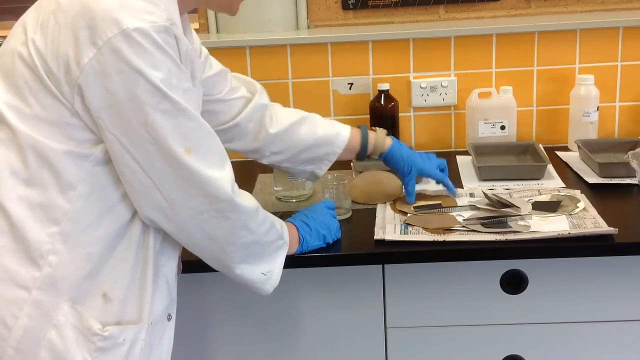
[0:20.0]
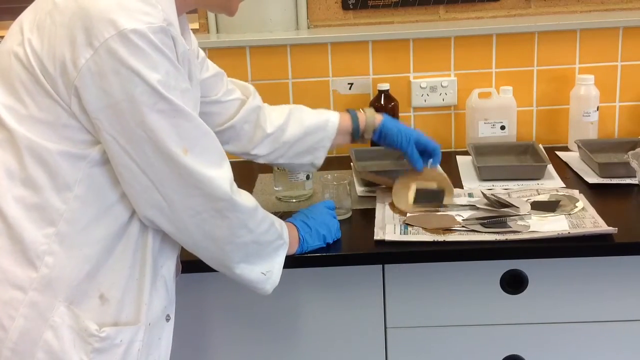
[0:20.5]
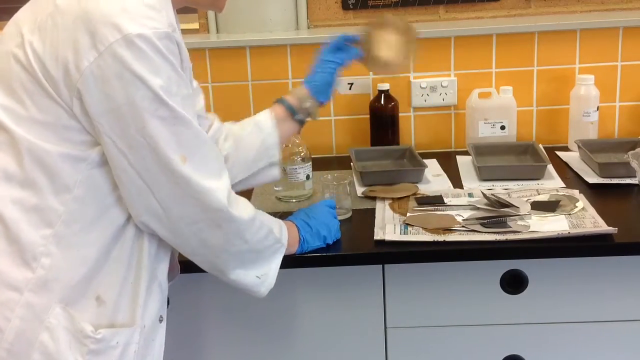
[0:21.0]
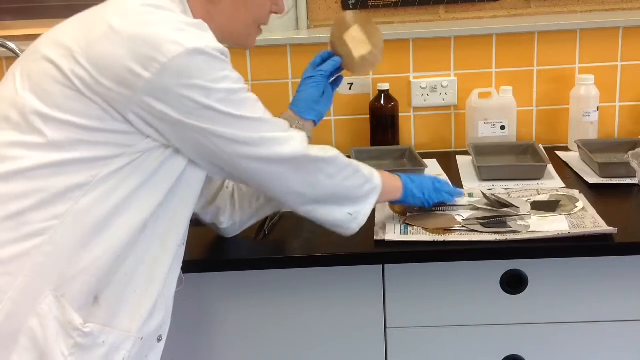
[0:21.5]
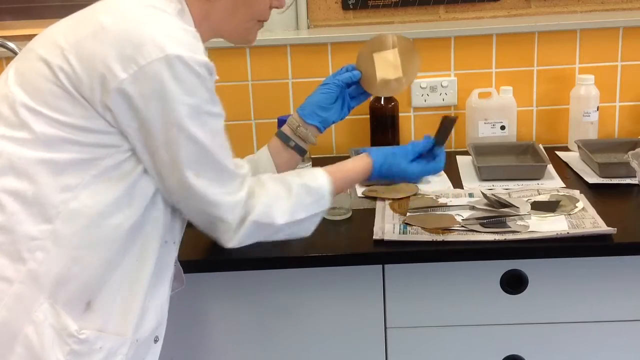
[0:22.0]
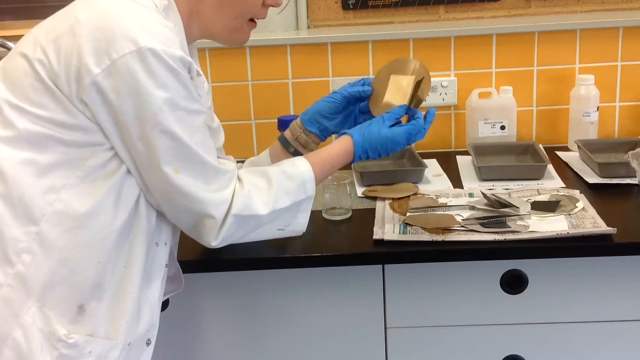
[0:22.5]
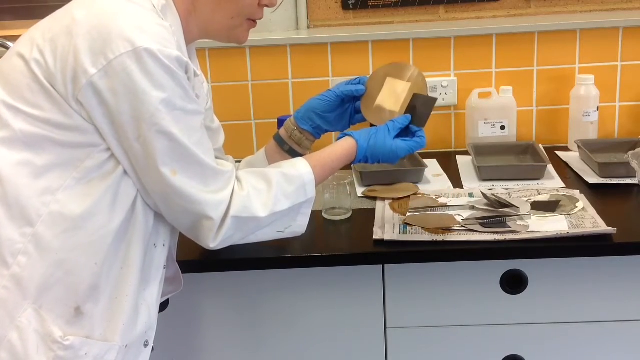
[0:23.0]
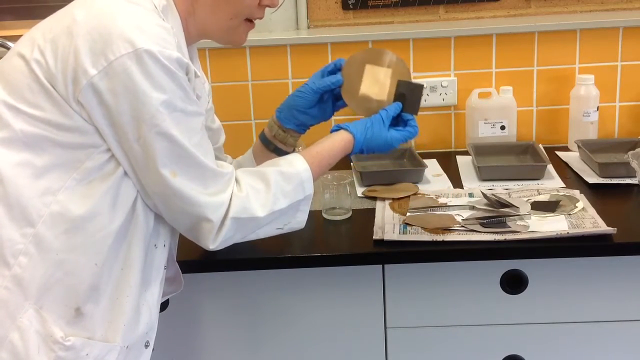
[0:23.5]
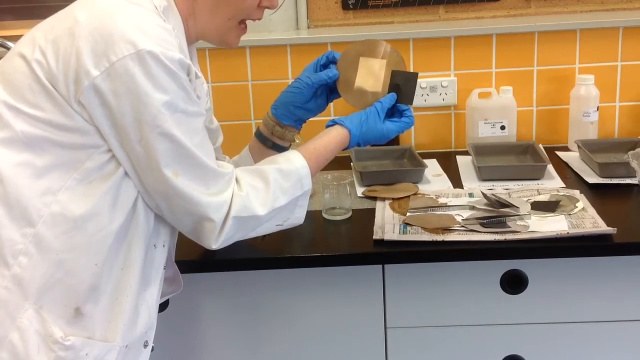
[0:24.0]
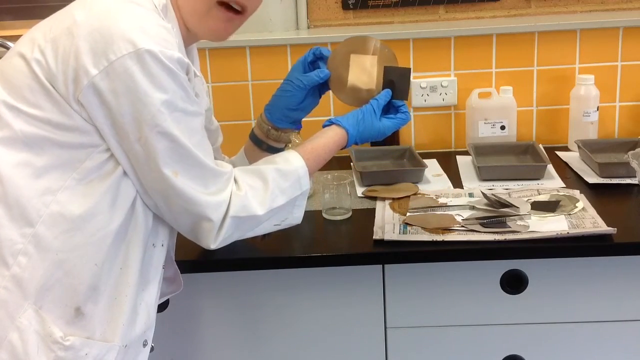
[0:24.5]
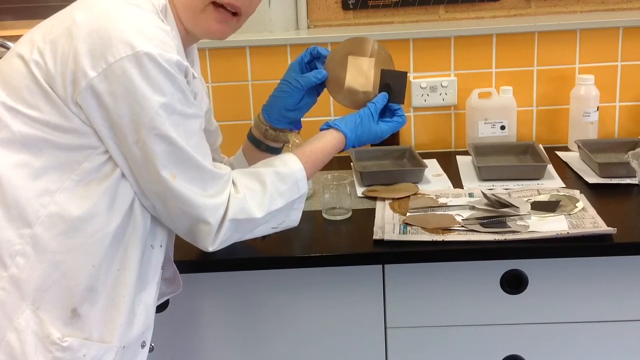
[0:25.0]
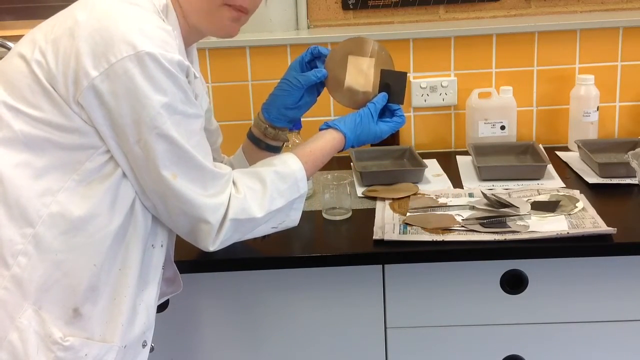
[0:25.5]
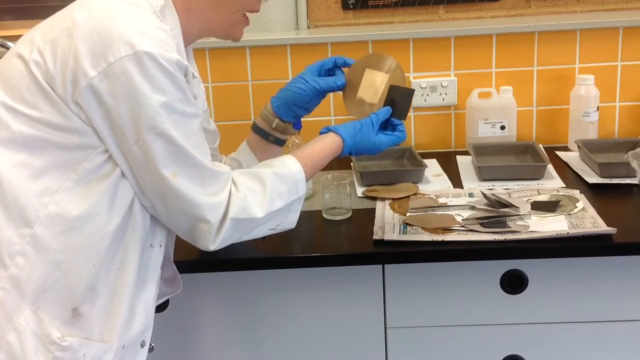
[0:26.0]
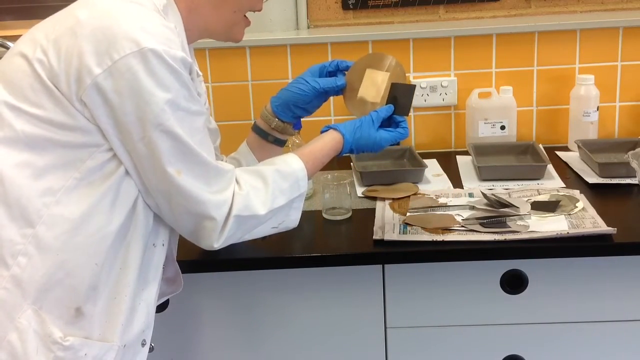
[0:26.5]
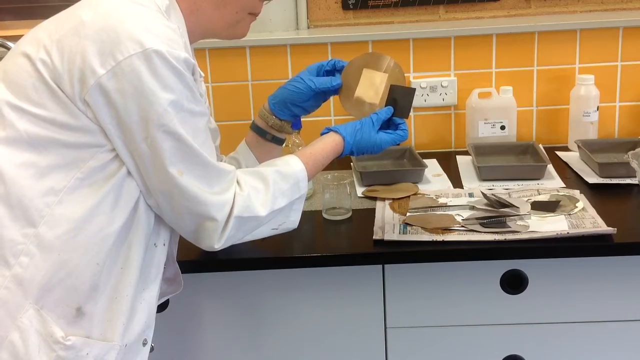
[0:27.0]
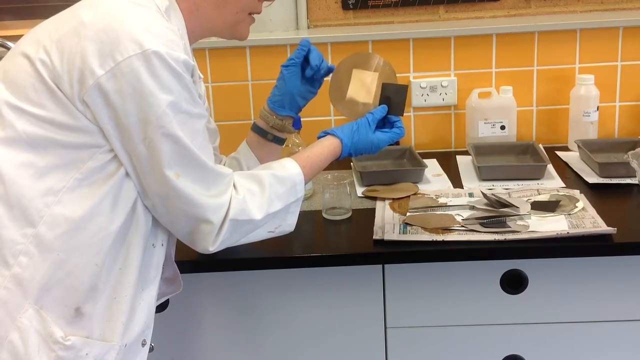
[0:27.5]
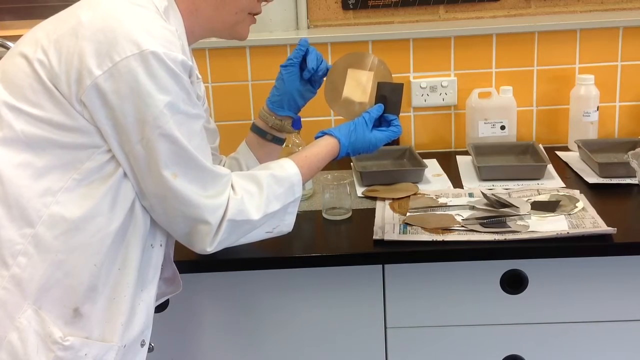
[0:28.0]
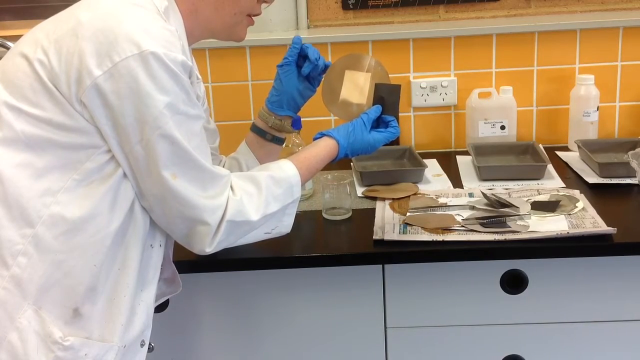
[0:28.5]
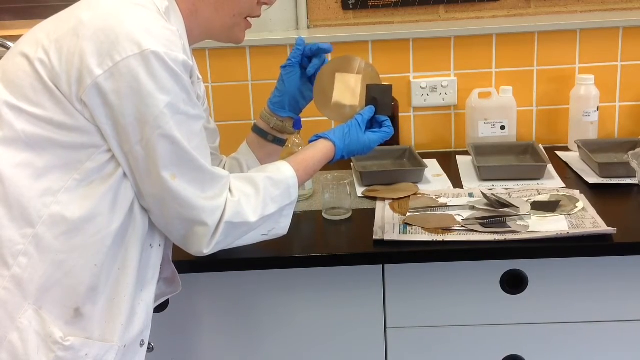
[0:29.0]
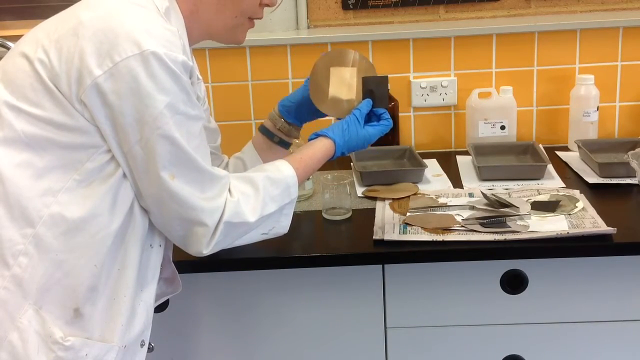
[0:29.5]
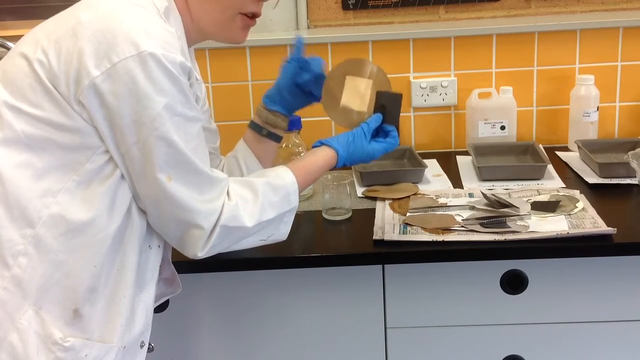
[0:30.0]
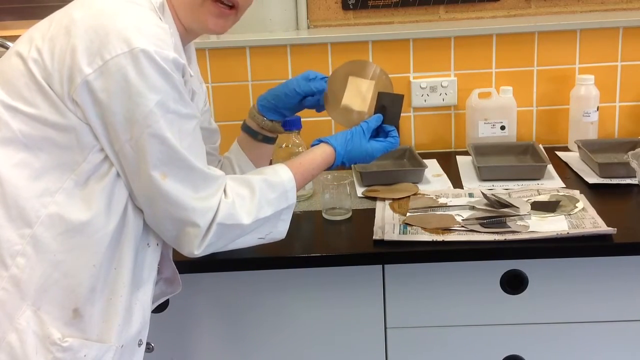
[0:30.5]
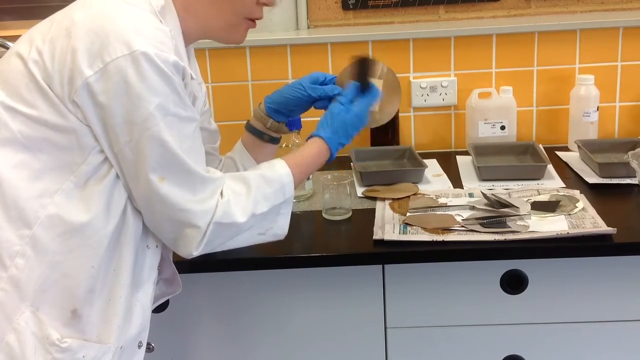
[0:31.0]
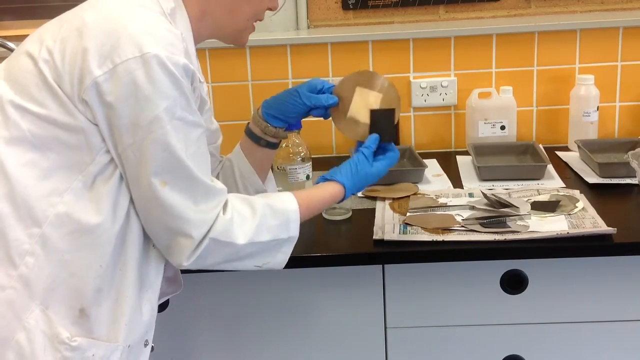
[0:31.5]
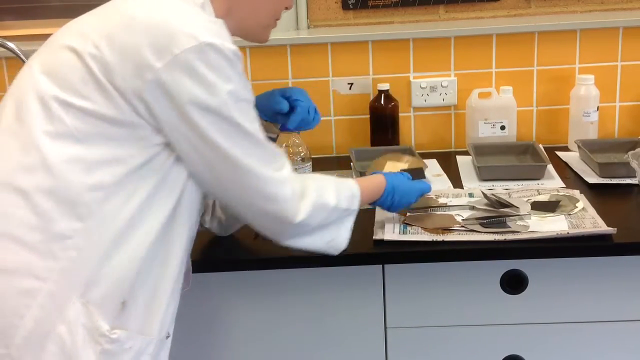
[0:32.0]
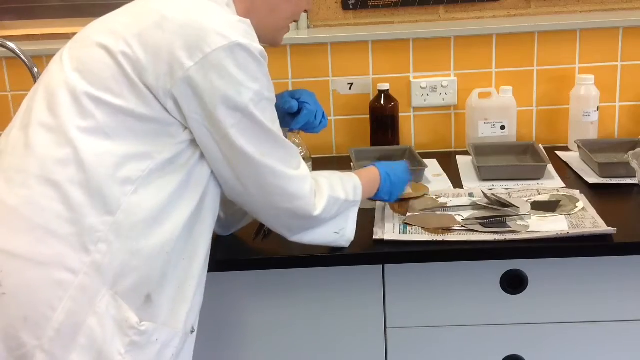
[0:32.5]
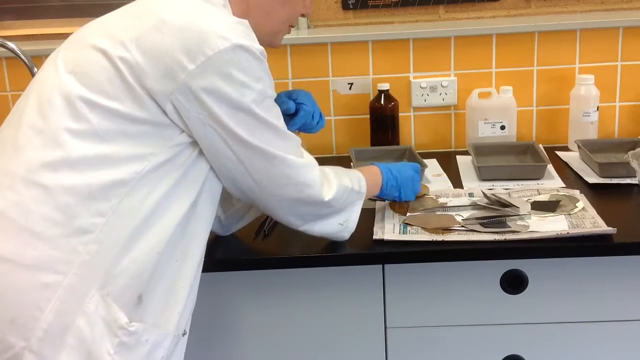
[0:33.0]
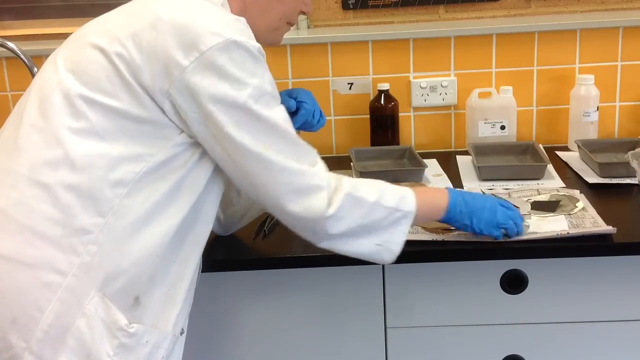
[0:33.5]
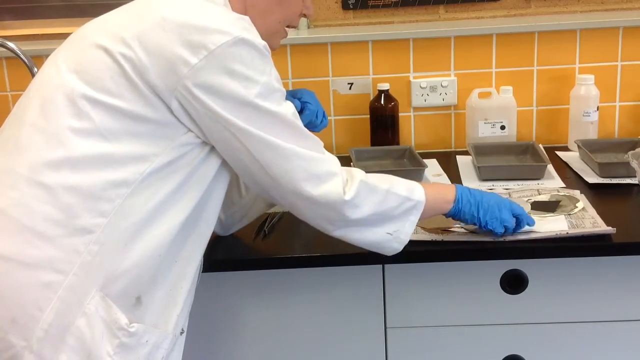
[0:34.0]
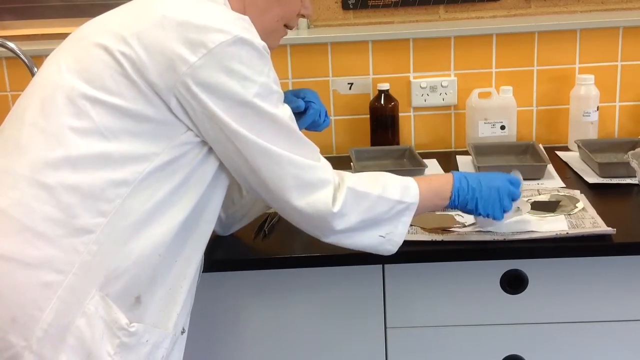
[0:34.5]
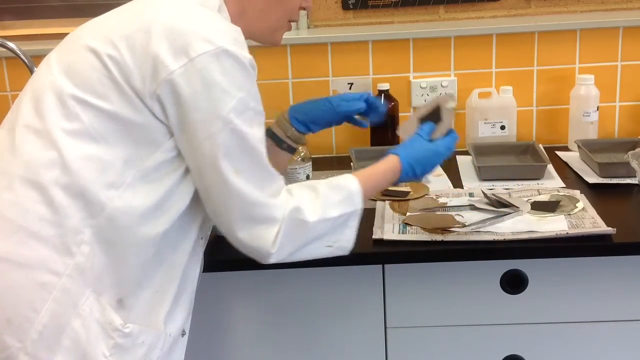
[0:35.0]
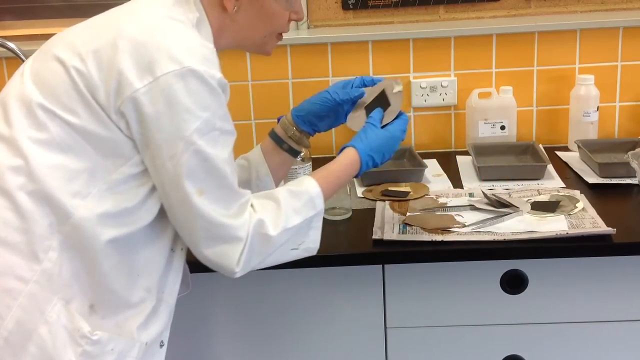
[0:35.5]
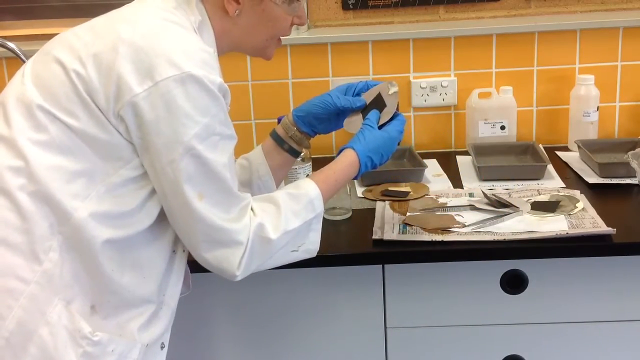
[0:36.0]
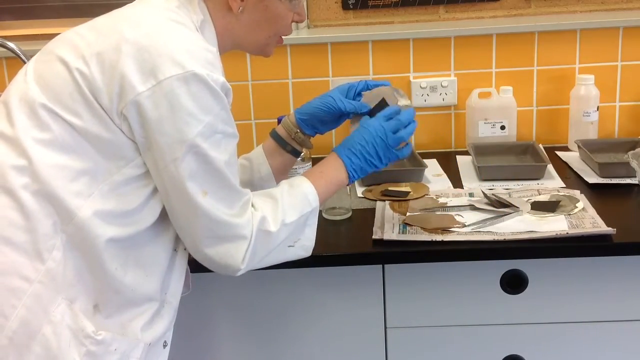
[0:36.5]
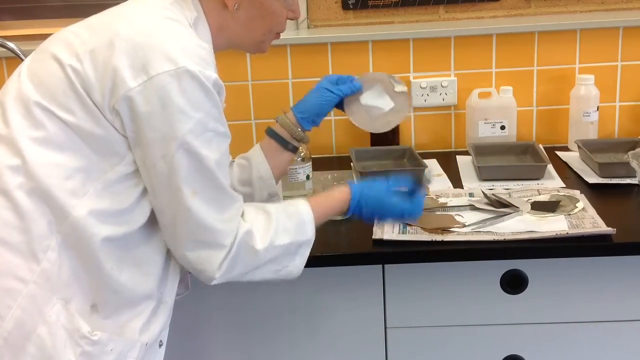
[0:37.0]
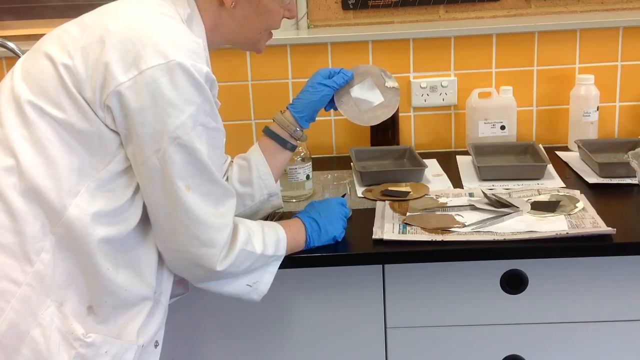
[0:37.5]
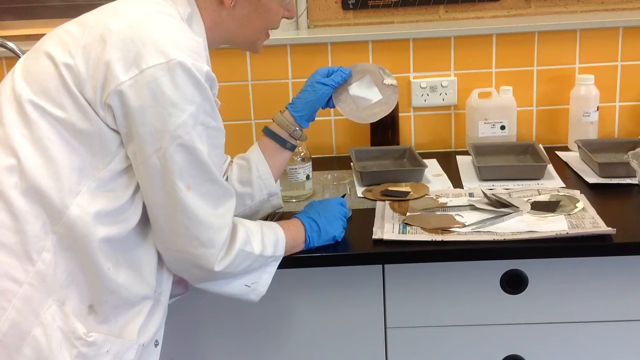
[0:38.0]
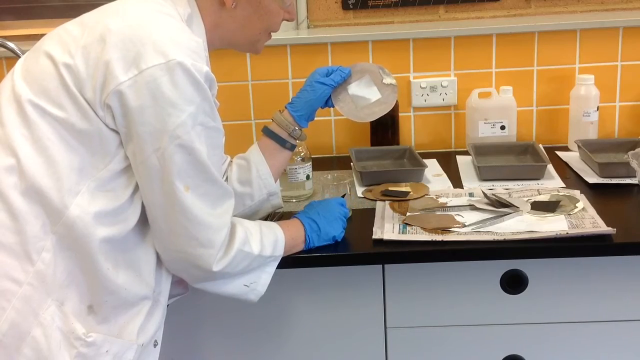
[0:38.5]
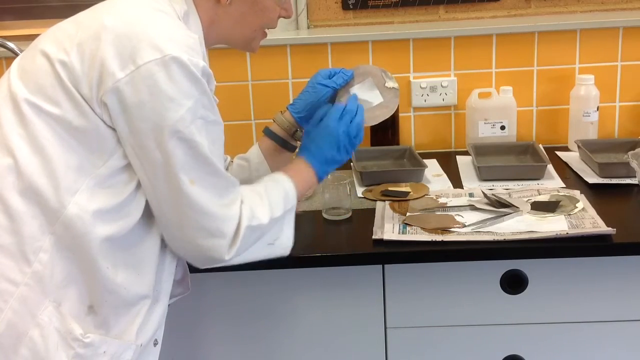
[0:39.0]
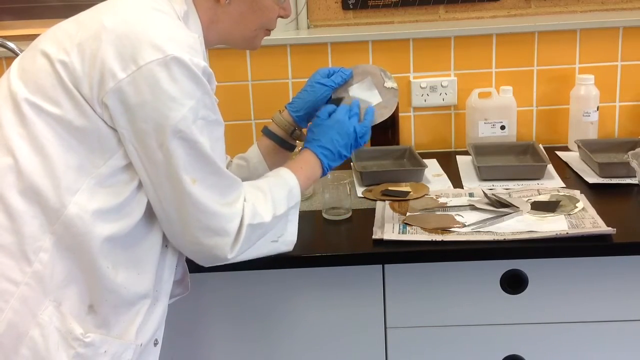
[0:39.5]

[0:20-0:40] A person in a white lab coat and blue gloves is in front of a brown countertop, reaching out with their left hand, which is above what looks like newspaper with brown circular cardboard cutouts on it. On their left hand is a wristwatch with a brown band, and there is a gray band across their left wrist. With their right hand they reach down and pick up one of the circular objects and then a square object, and hold them up together. The right side of the person's face and their lips are visible at the top of the screen as they talk. They set the pieces down and pick up another circular object and square object with the right hand, then put the circular object in their left hand and hold the square object in their right hand.